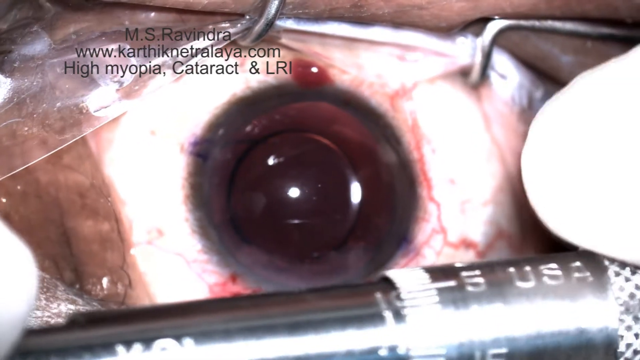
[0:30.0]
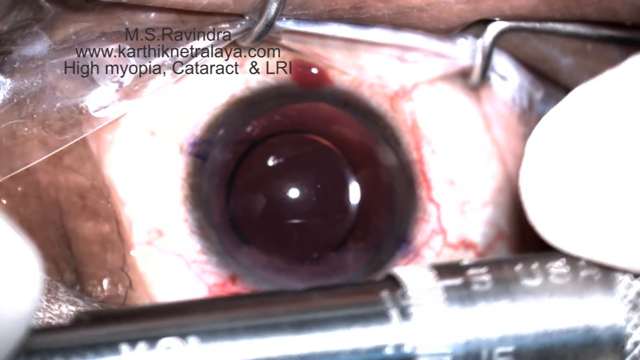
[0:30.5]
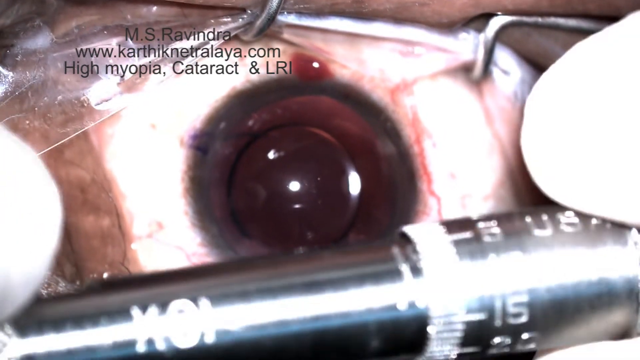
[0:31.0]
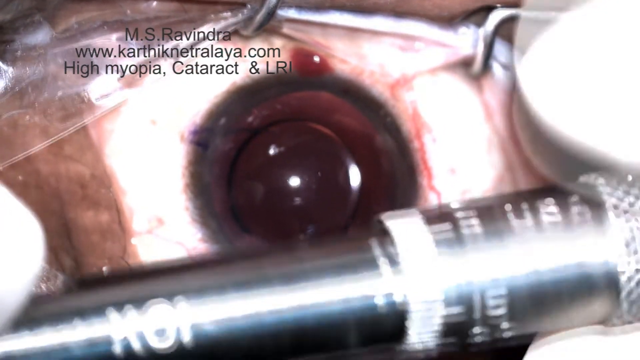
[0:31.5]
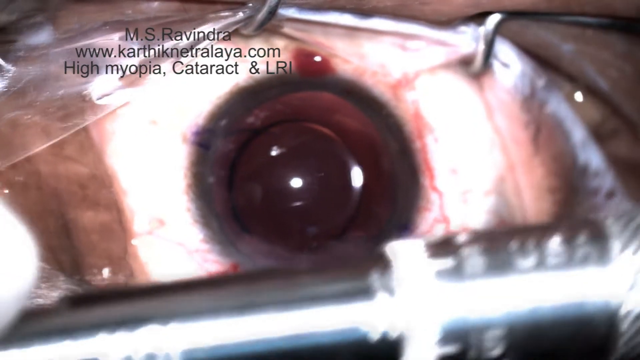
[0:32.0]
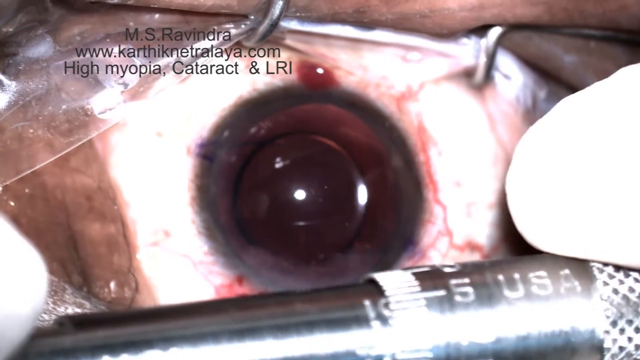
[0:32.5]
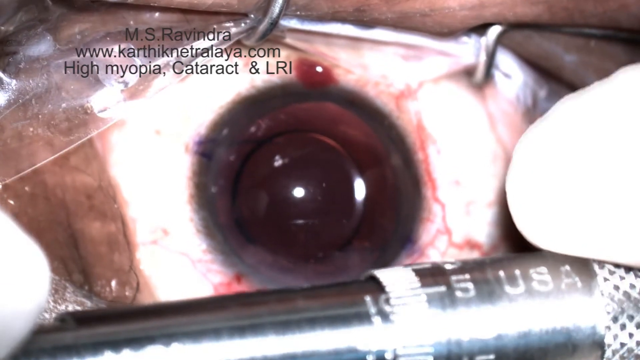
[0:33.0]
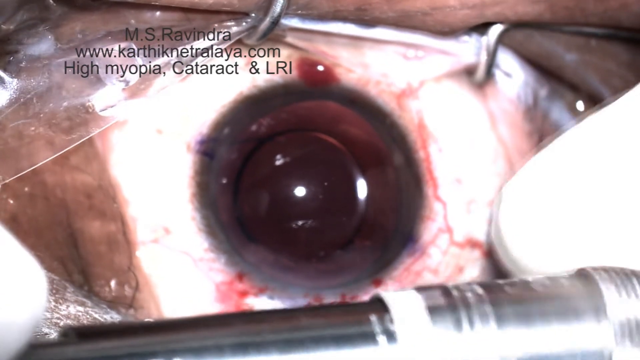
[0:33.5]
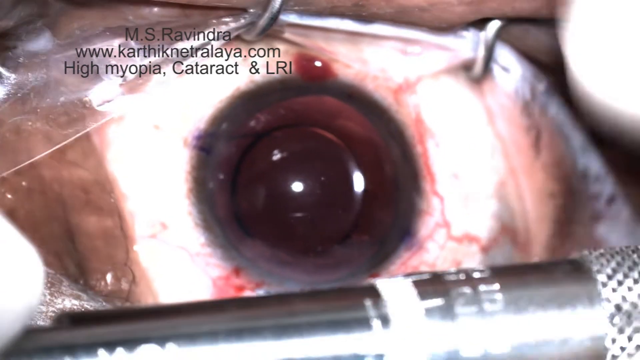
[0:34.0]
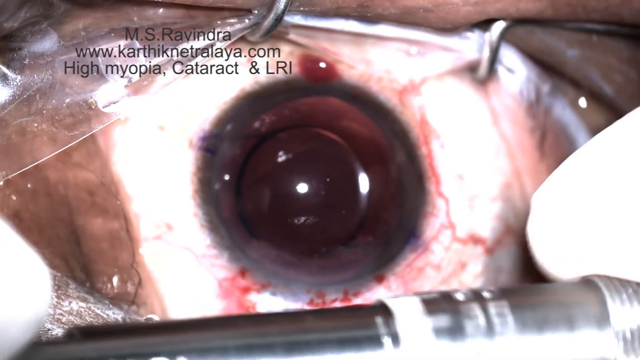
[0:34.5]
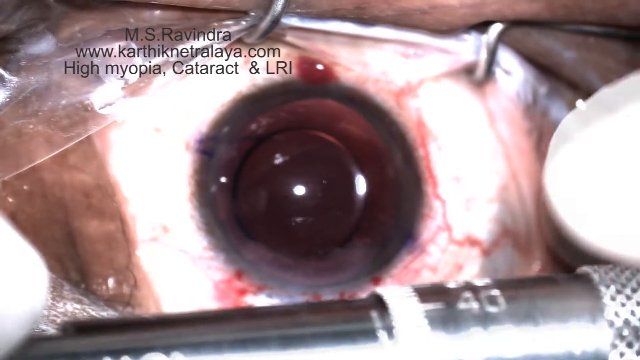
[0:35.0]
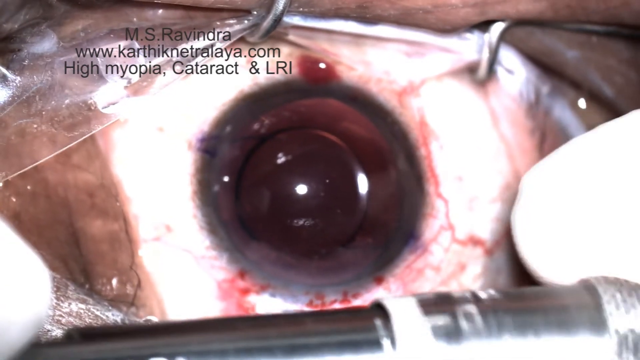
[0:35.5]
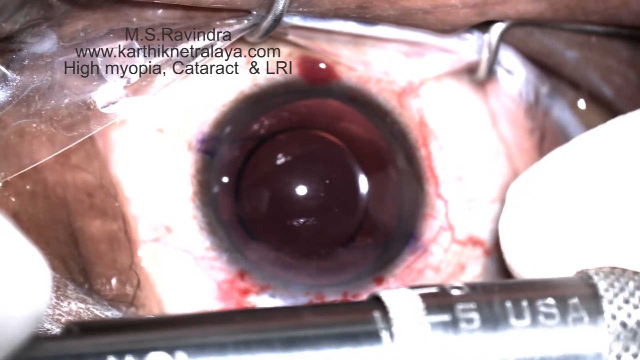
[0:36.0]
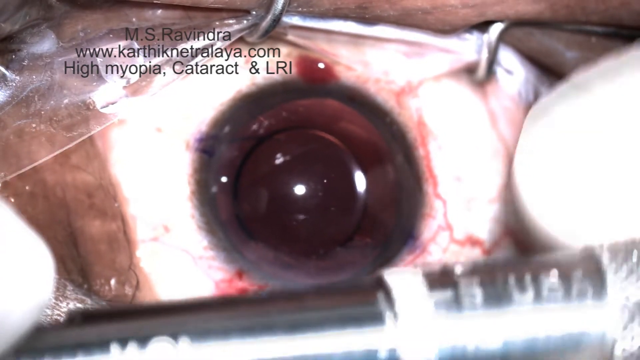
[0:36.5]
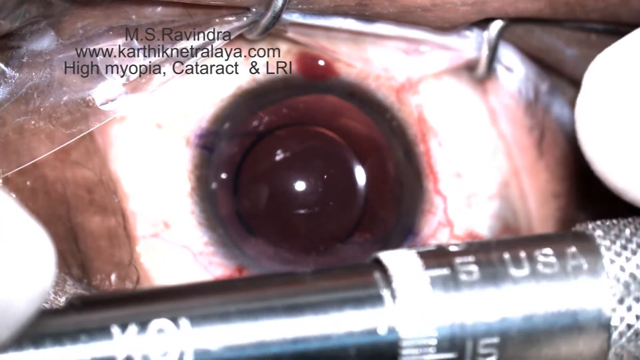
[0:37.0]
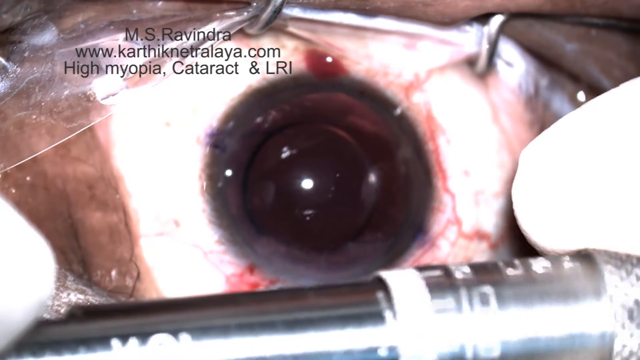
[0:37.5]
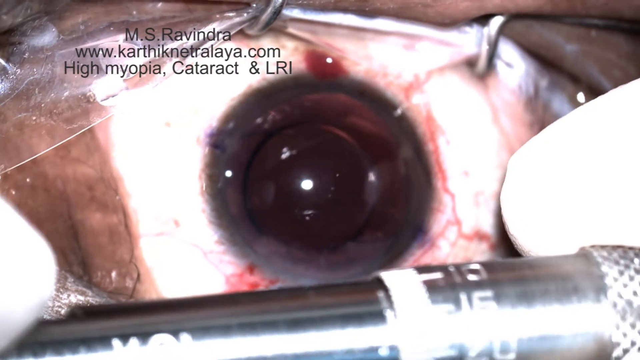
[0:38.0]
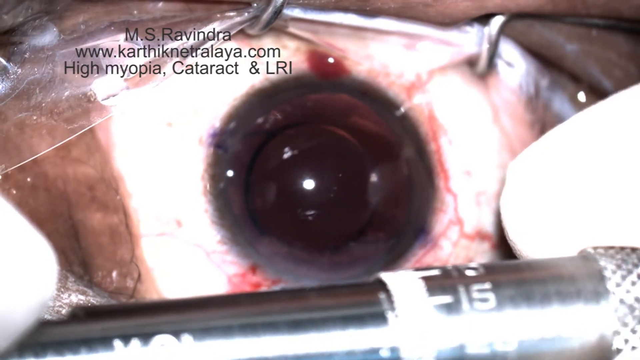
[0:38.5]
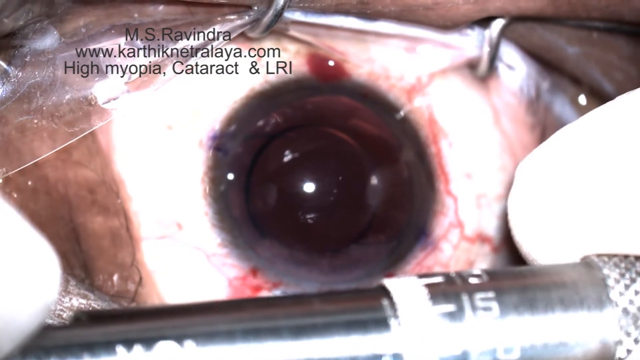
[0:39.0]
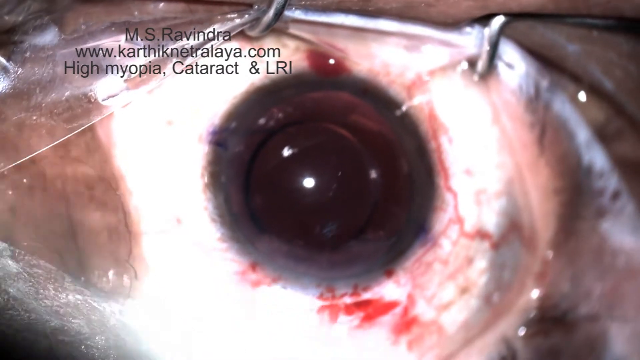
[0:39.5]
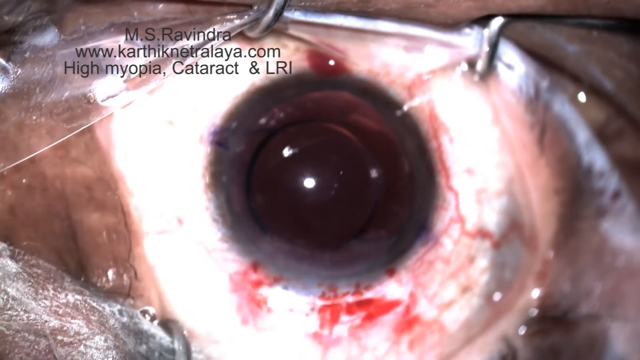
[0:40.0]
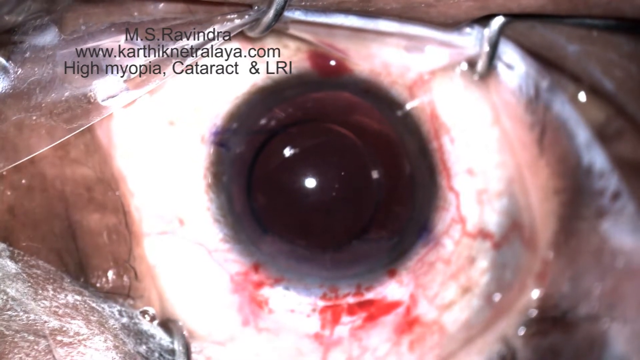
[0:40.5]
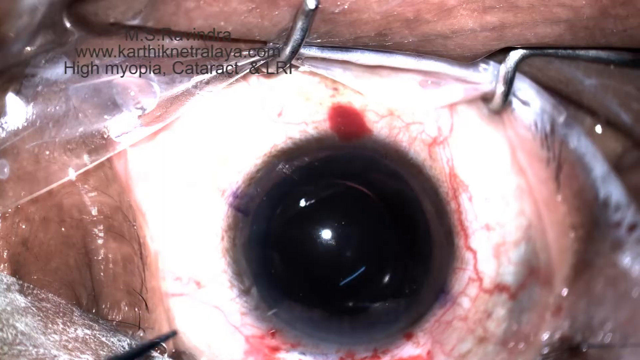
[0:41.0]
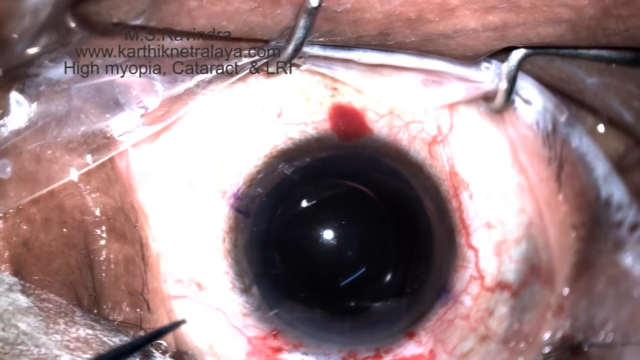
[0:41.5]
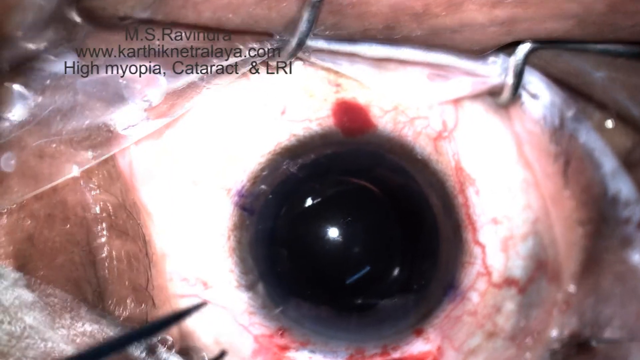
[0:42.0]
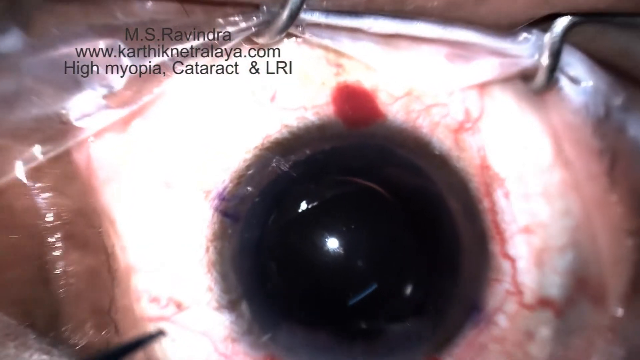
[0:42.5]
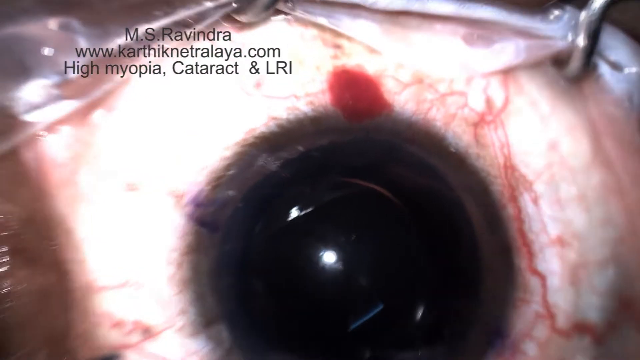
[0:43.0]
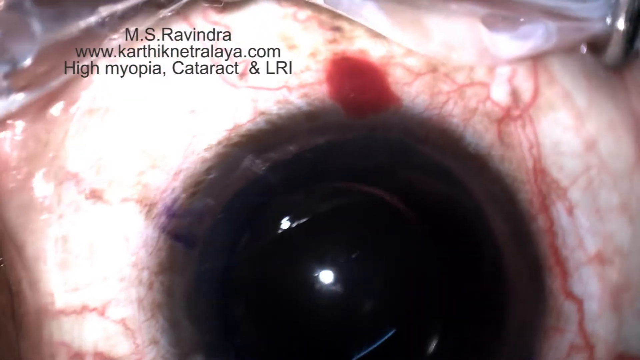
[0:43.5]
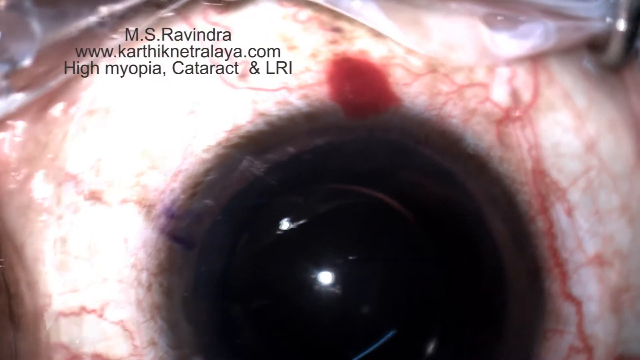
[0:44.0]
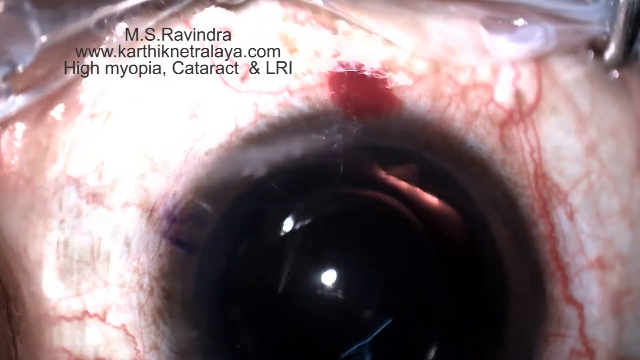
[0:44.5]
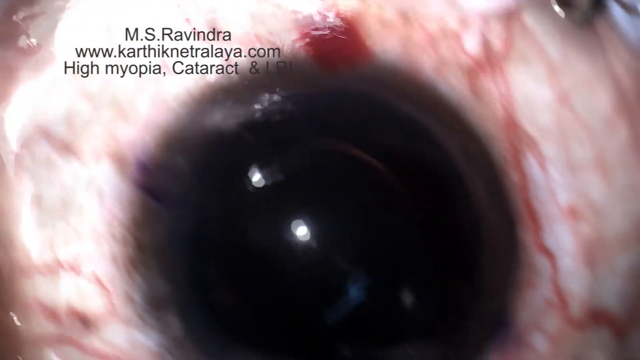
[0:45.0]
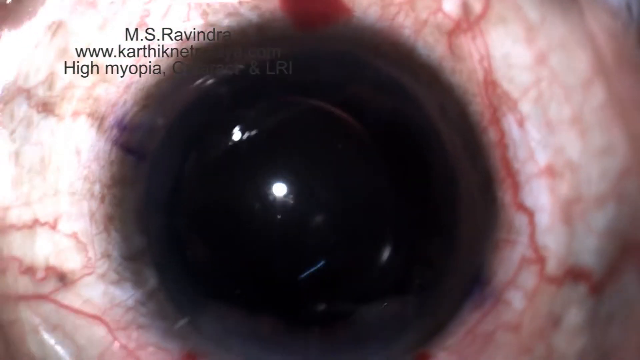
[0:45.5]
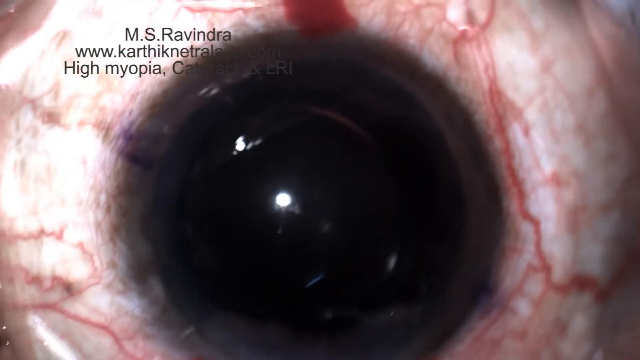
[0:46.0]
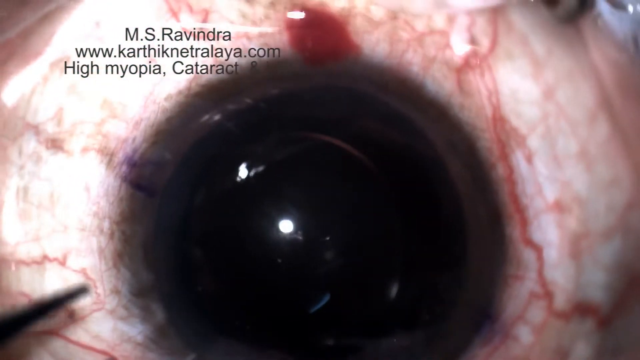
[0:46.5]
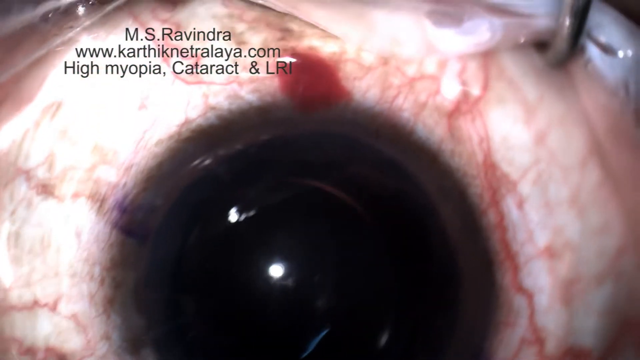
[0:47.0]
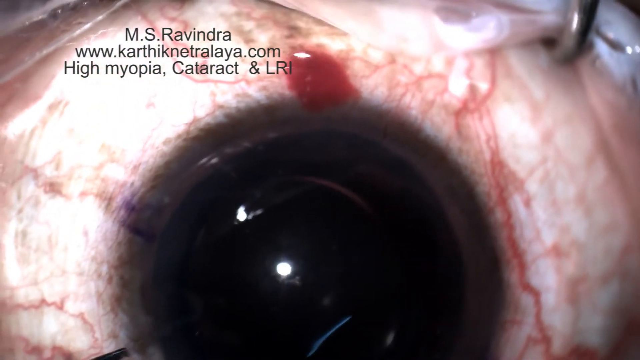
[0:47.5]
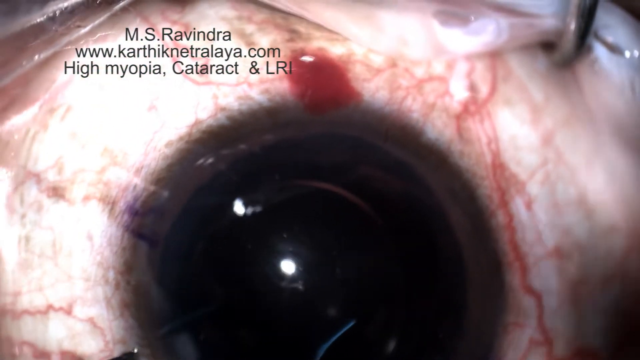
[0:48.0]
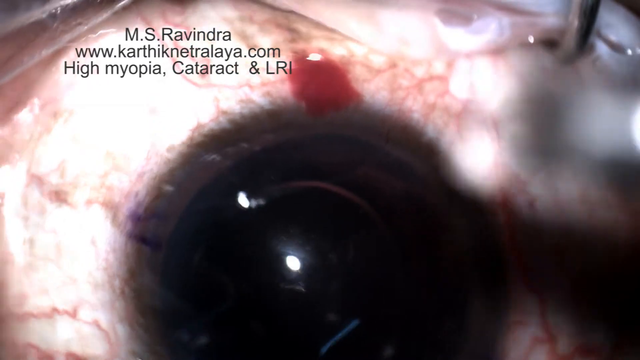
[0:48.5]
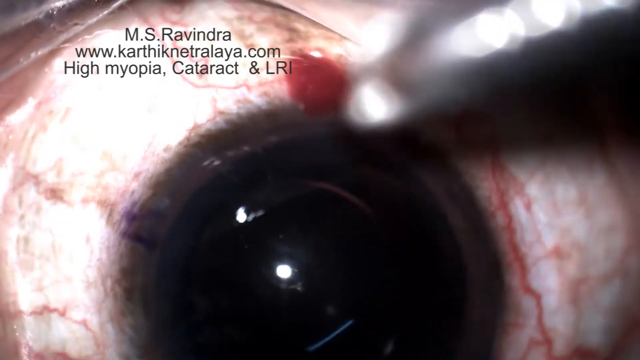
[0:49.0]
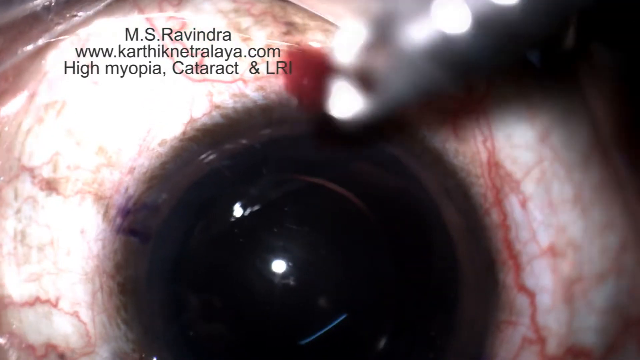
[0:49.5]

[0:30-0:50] The eyeball is in the centre of the frame. Two thumbs, one on the left of the screen and one on the right, turn the metal implement, perhaps tightening something. There are numbers on the implement, maybe indicating that a setting is being increased or decreased. The implement then goes out of the picture. The view zooms in quite far towards the eyeball, so most of the image is the black circle of the iris. From the left-hand side, a squirt of clear liquid lands on the eyeball, most likely for cleanliness and to stop it drying out. The implement seen in the hand earlier then appears, just about to go onto the top right-hand side of the iris as the shot ends.